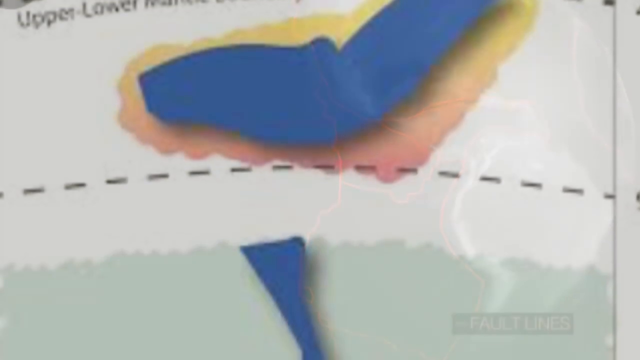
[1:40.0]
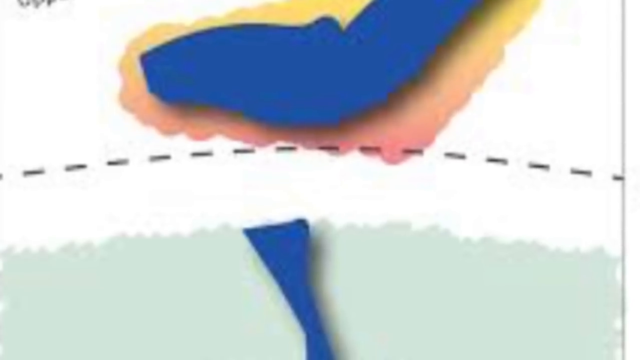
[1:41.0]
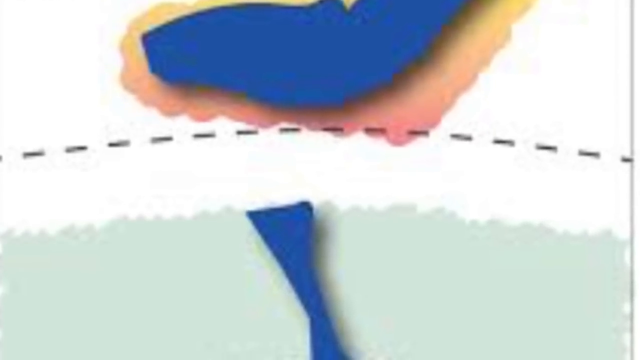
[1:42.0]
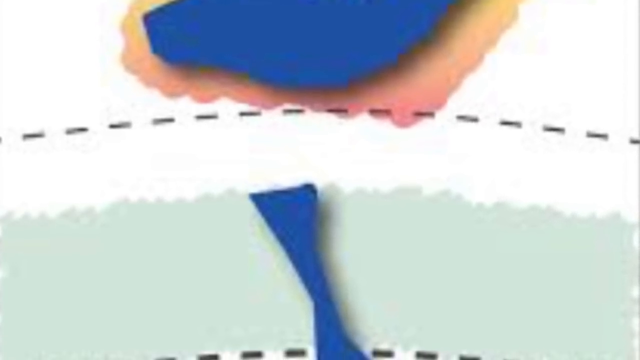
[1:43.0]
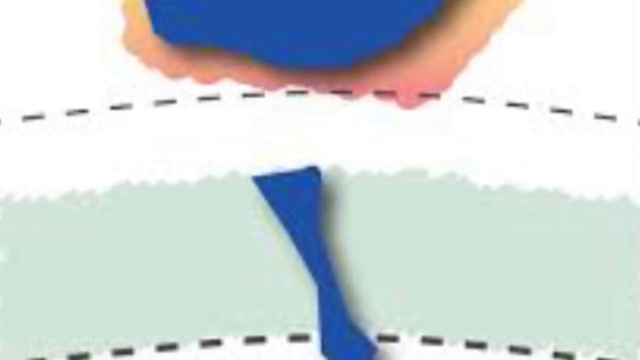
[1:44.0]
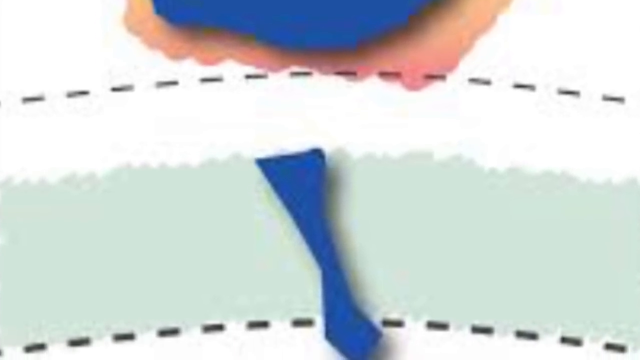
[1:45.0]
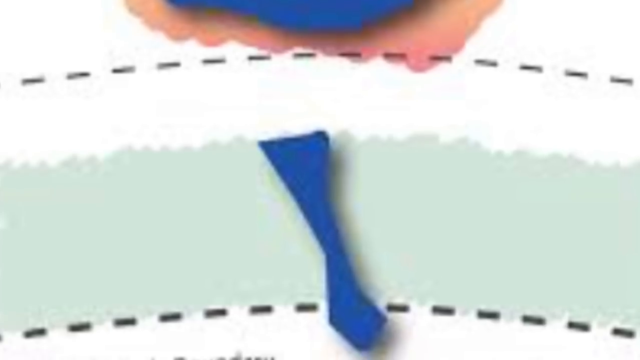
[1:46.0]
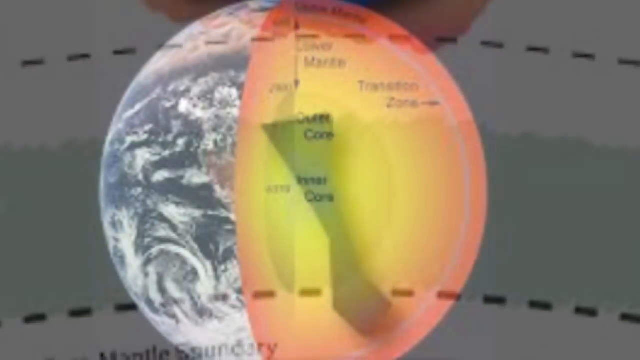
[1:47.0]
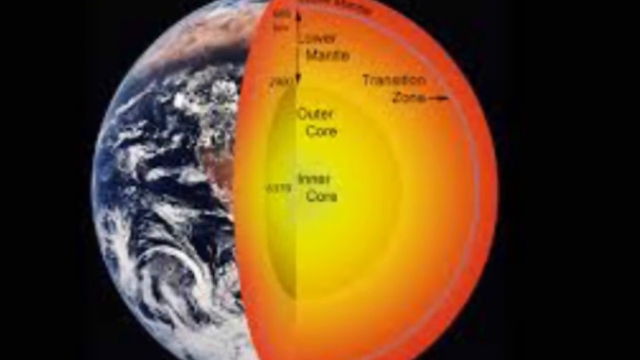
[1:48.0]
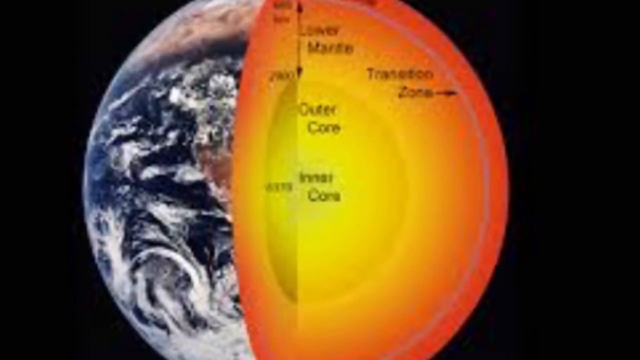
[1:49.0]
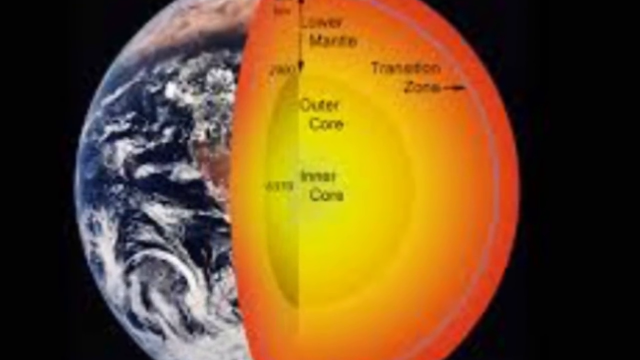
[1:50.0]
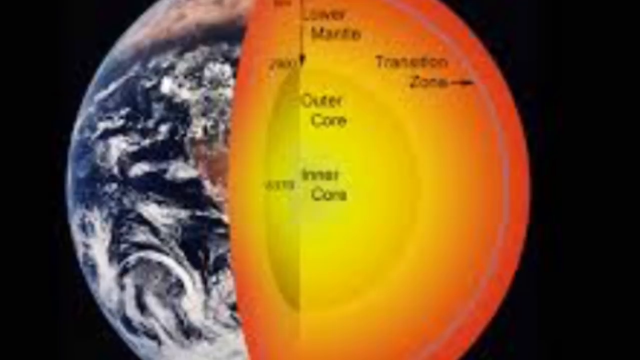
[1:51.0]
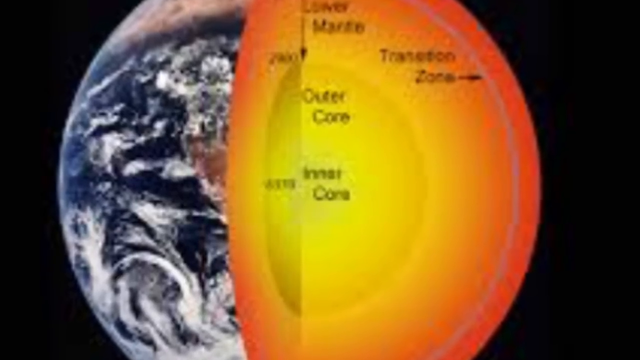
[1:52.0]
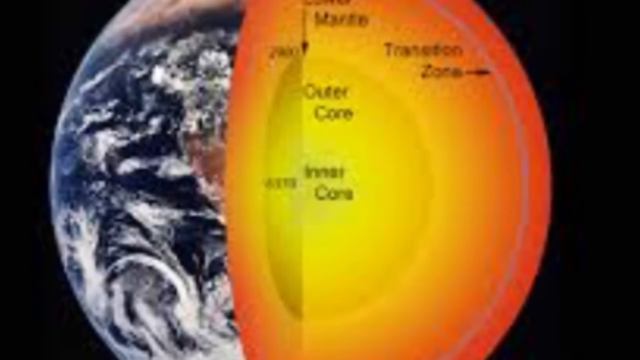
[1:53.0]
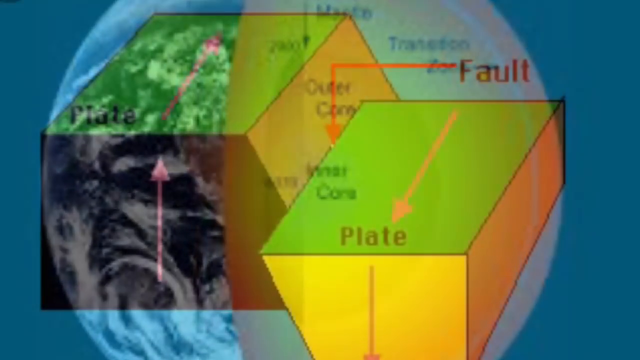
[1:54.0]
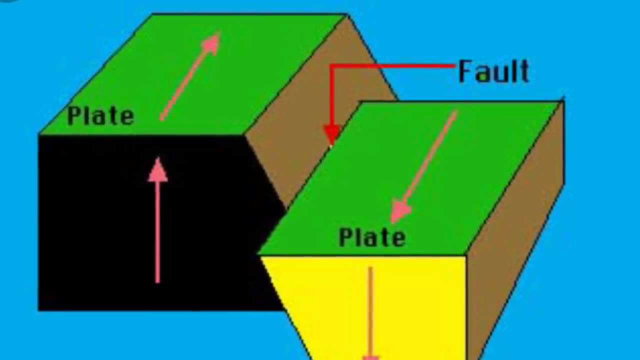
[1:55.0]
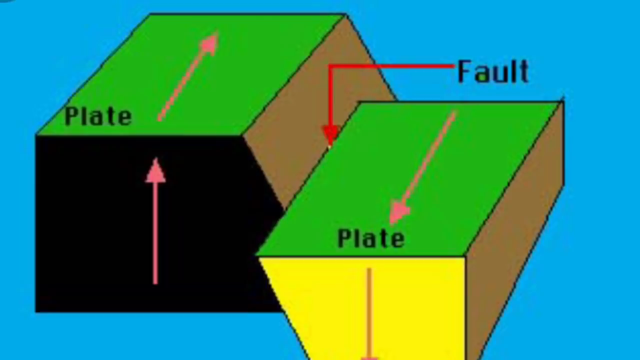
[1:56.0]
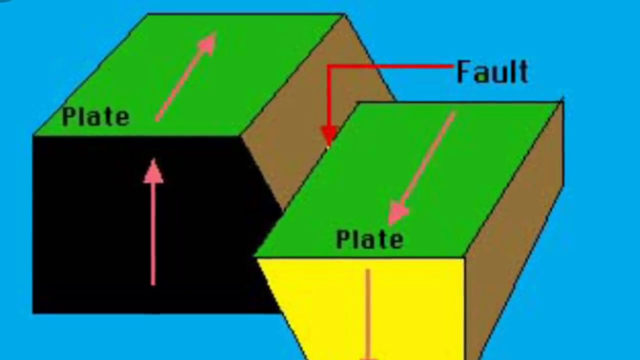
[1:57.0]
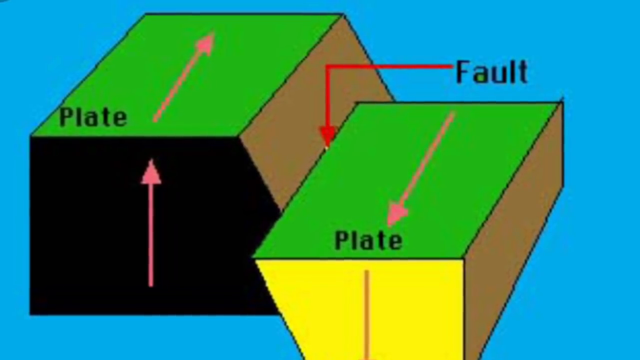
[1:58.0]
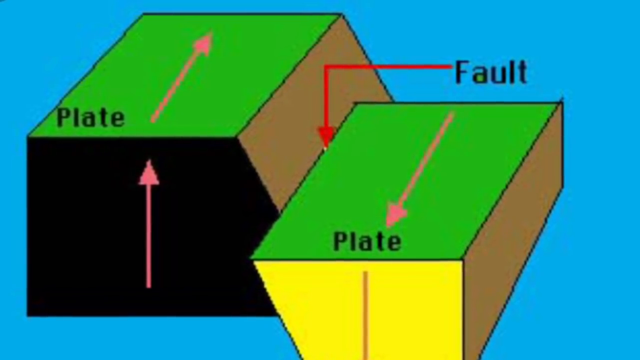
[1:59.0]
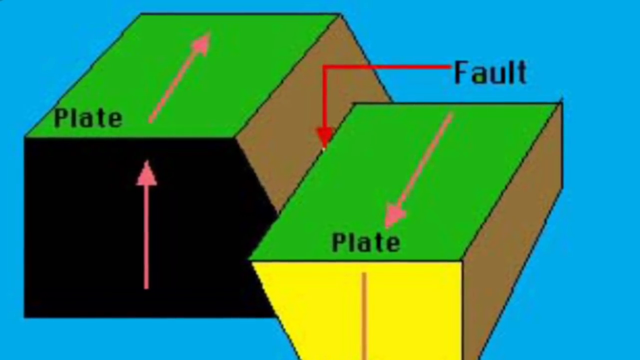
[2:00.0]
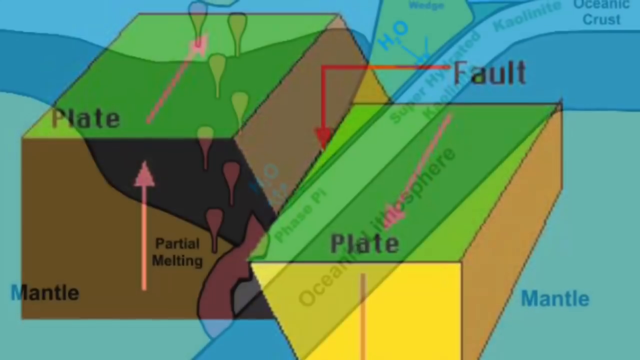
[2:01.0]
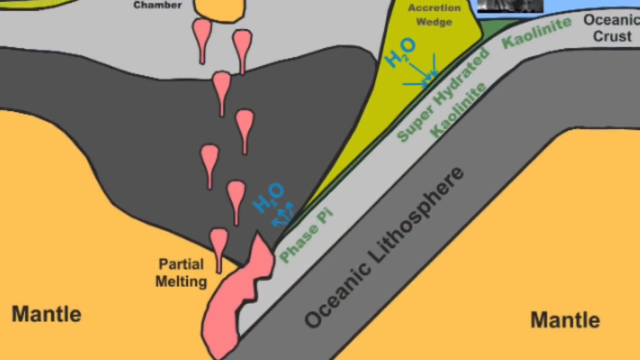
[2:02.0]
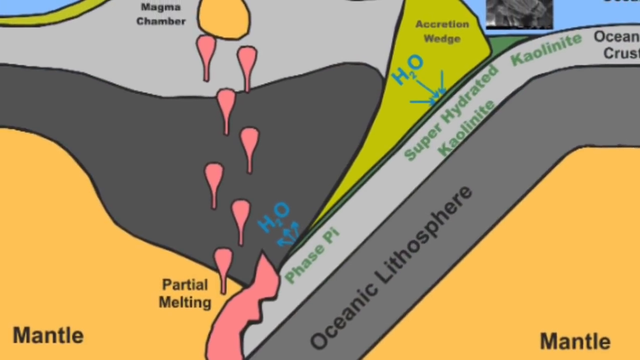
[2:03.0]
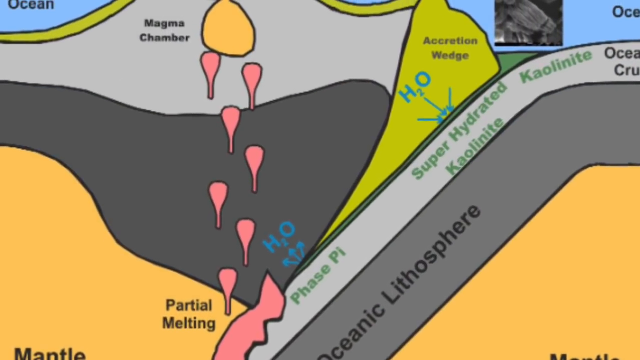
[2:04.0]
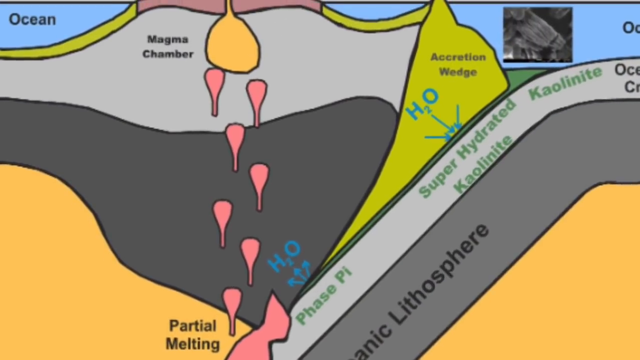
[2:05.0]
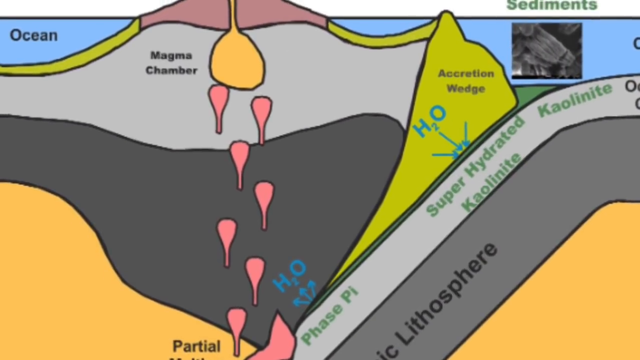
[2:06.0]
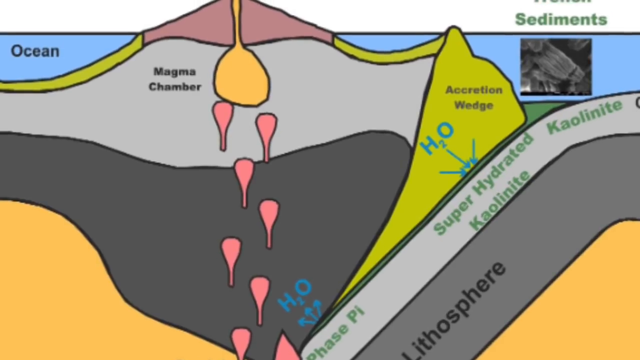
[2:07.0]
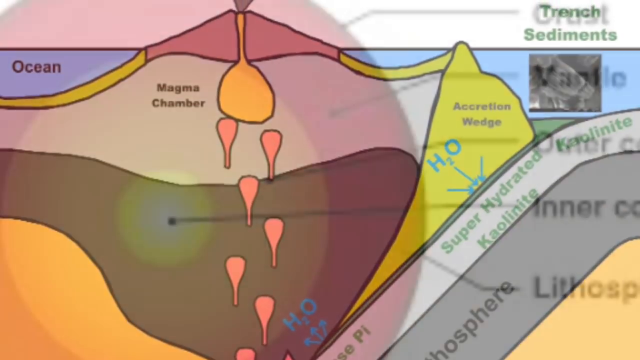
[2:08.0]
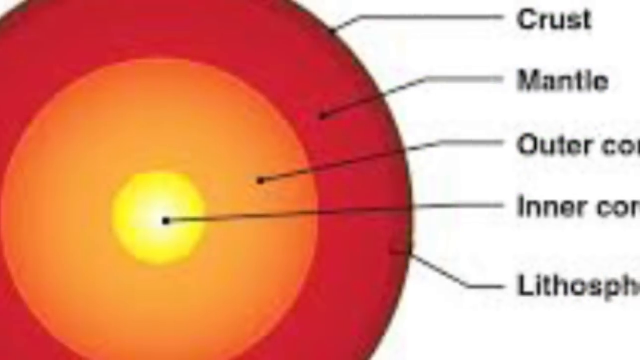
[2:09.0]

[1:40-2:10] A dotted line runs across the screen, with a blob of blue outlined and highlighted in an orange-yellowish color, staying close. Another blue structure goes down into another dotted line. The view switches to a picture of the Earth that looks like it is in space, with a section cut out like a piece of pie, showing the zones labeled outer core, inner core and the mantle; the center looks hollowed. The Earth's surface is seen from a space point of view with clouds, ocean and land. The inner sides are a hot orange that lightens to yellow toward the center in the core area, almost like an ombre. The camera zooms into the core and keeps zooming in. A different shot then shows two uneven rectangle-type boxes, with labels reading "the plate", "the fault line" and "the plate".